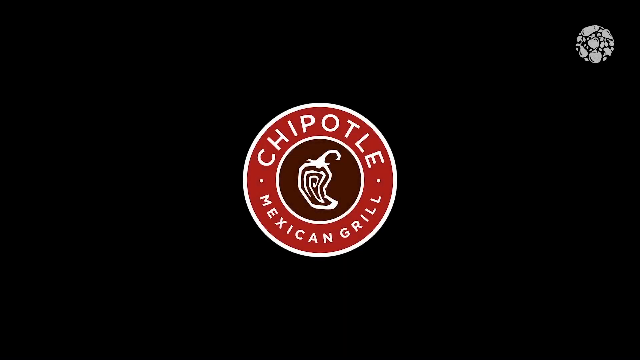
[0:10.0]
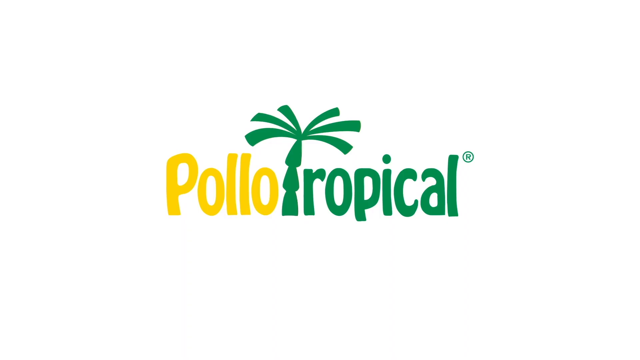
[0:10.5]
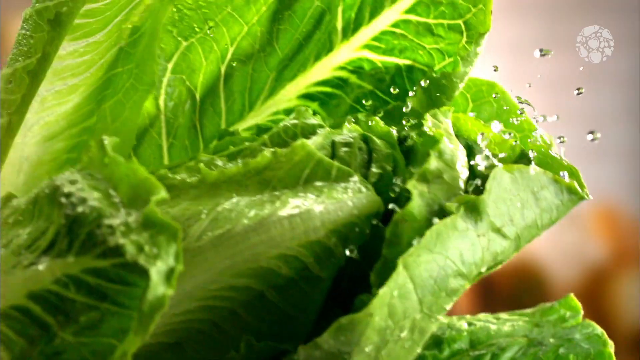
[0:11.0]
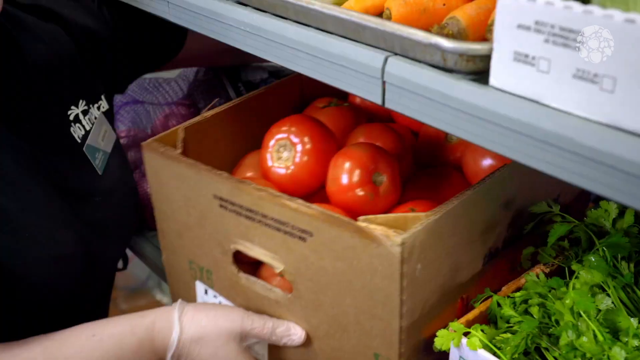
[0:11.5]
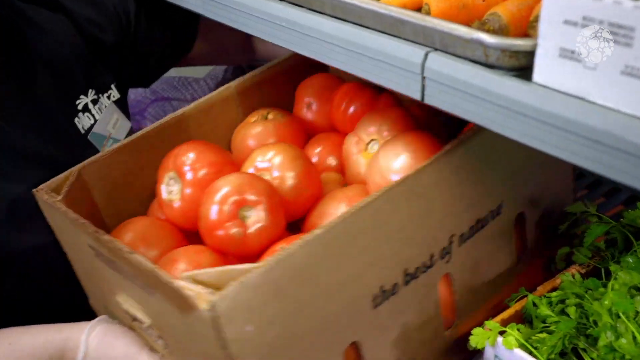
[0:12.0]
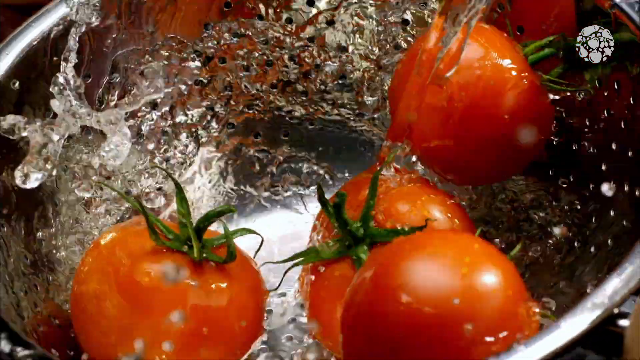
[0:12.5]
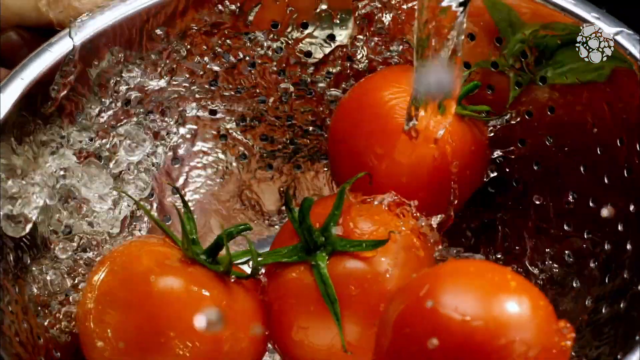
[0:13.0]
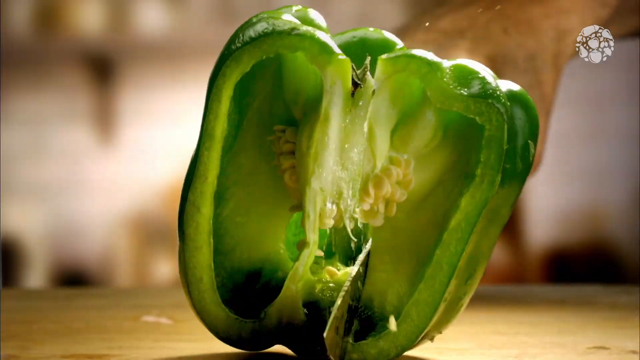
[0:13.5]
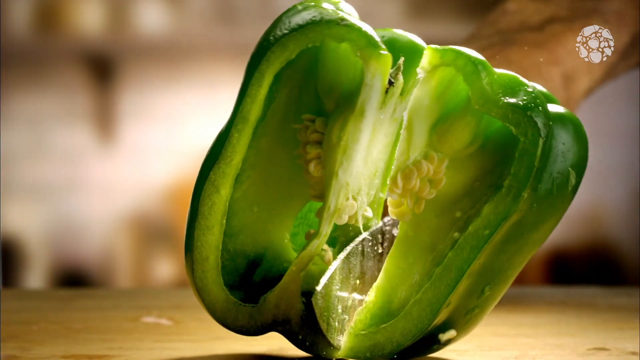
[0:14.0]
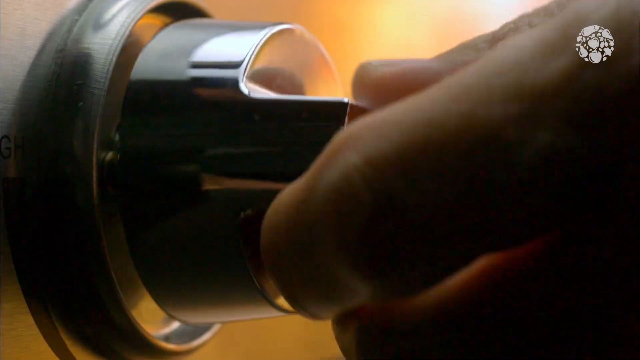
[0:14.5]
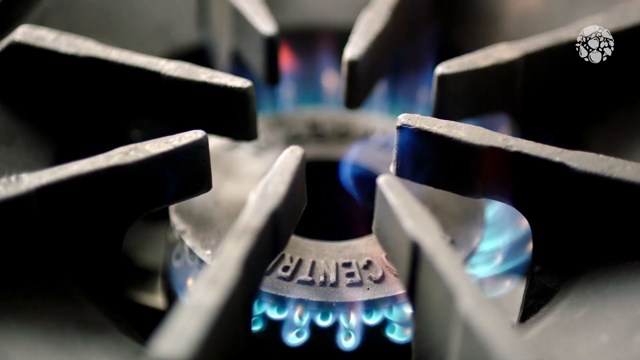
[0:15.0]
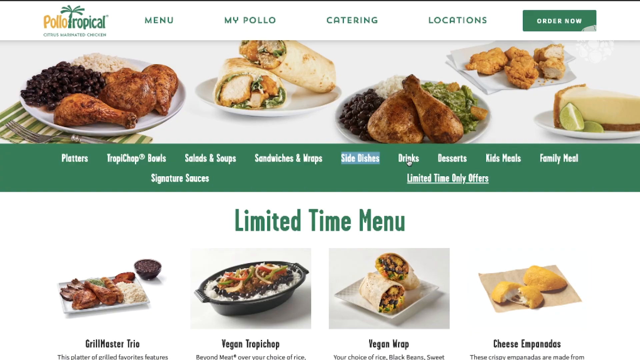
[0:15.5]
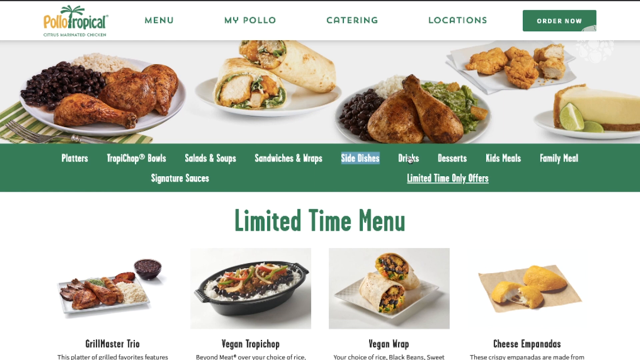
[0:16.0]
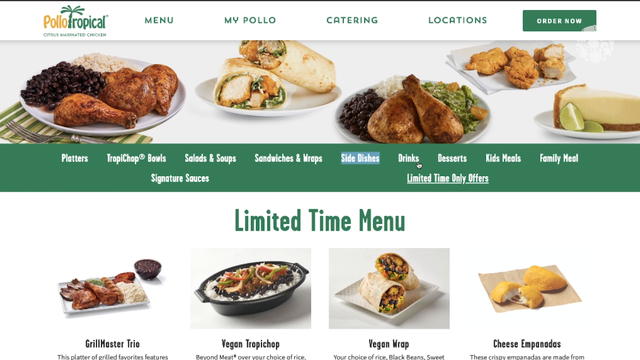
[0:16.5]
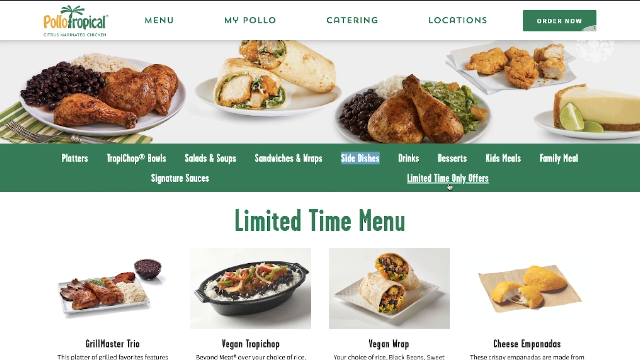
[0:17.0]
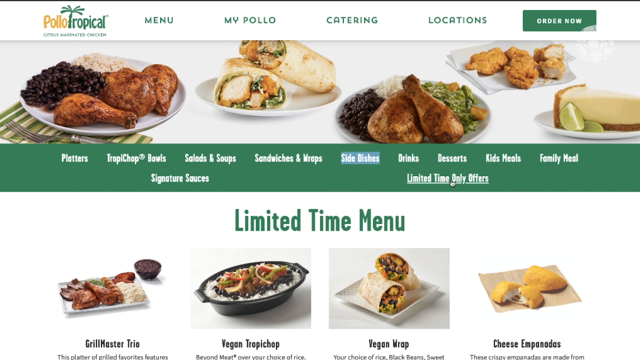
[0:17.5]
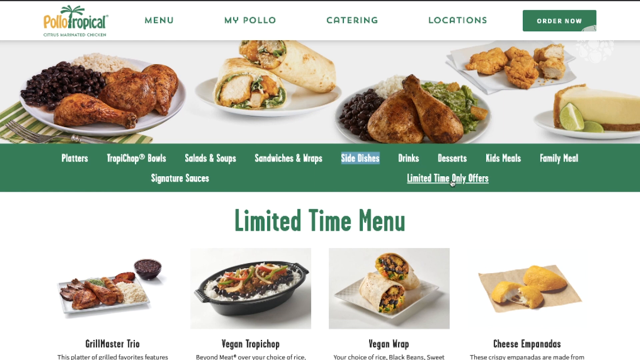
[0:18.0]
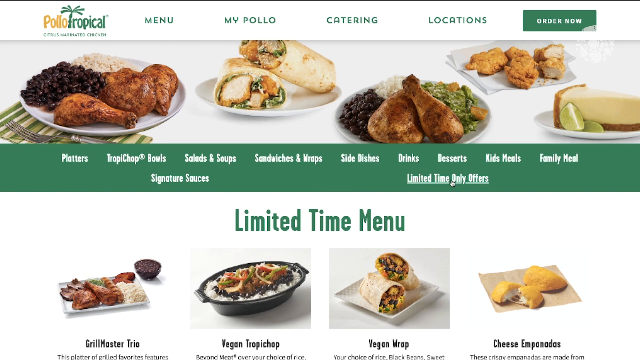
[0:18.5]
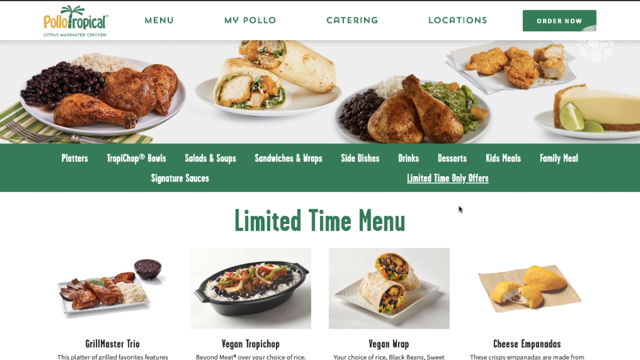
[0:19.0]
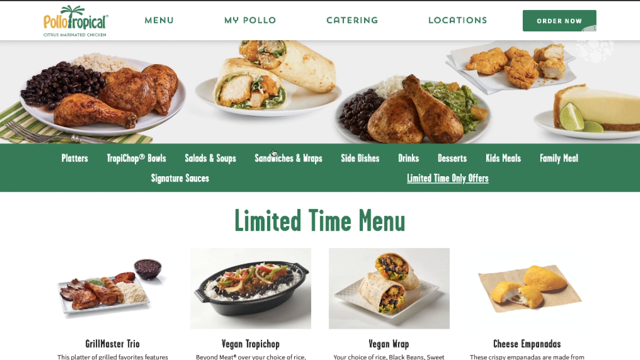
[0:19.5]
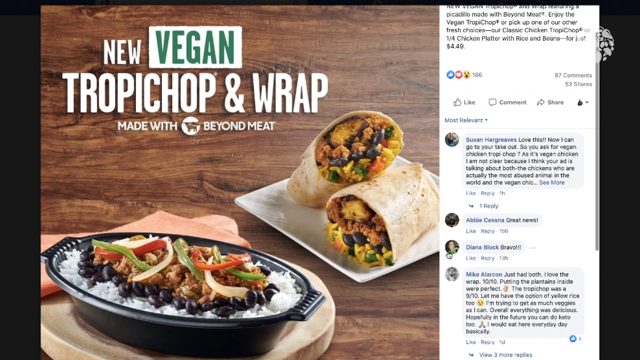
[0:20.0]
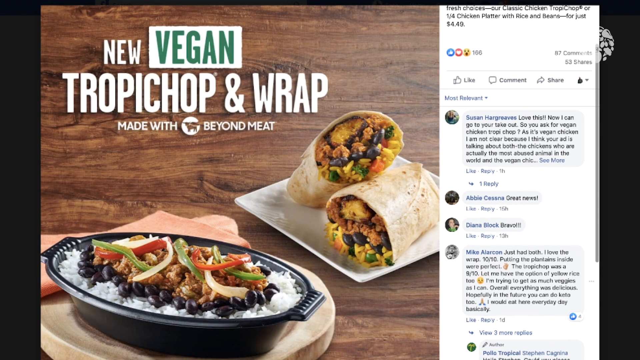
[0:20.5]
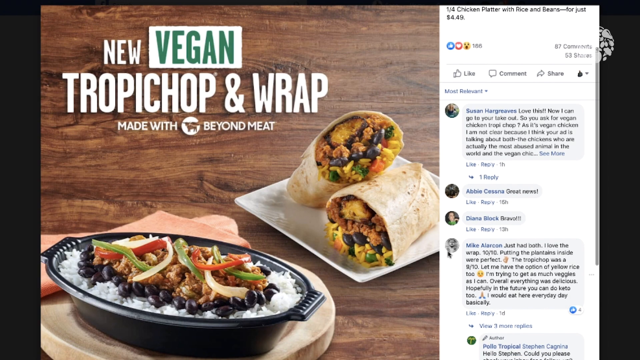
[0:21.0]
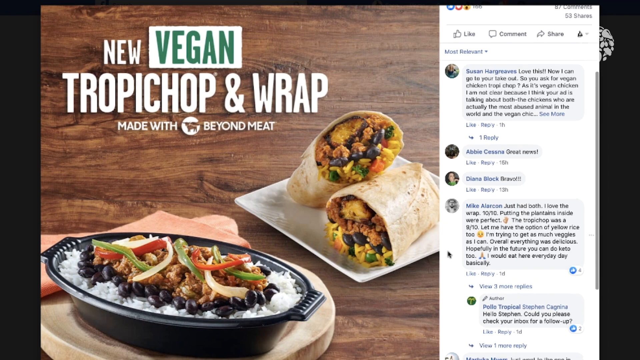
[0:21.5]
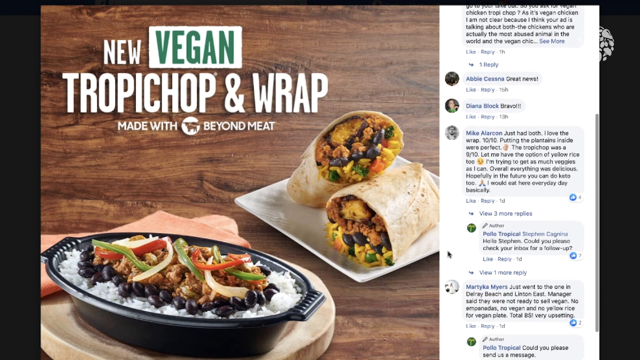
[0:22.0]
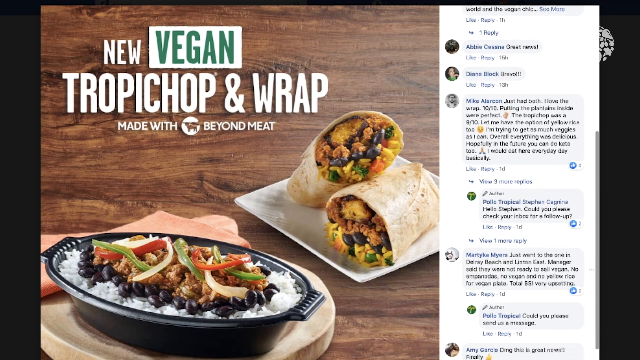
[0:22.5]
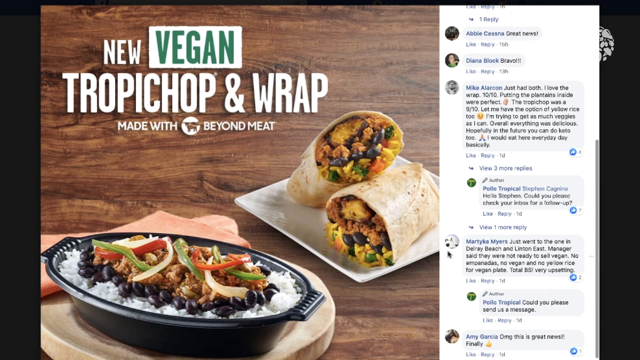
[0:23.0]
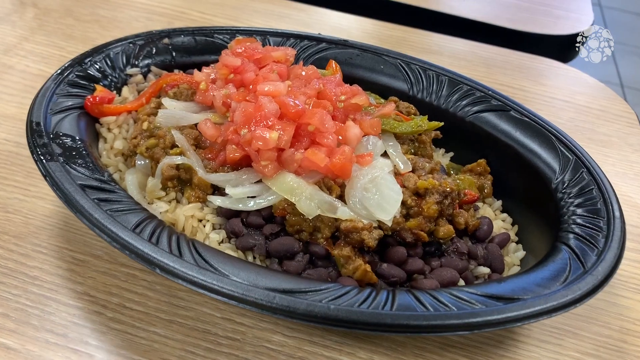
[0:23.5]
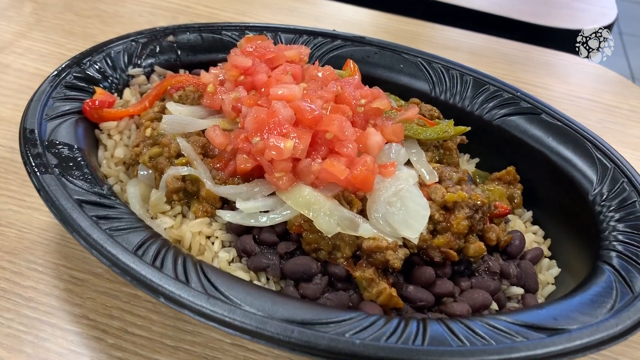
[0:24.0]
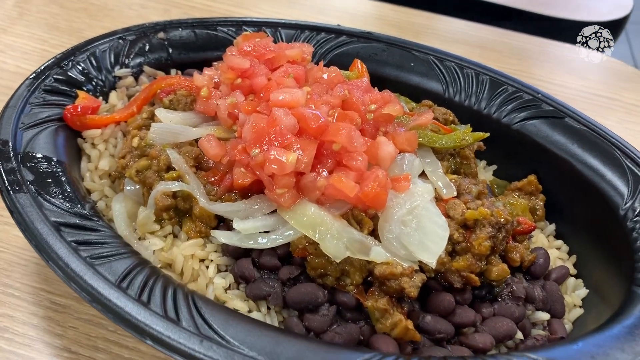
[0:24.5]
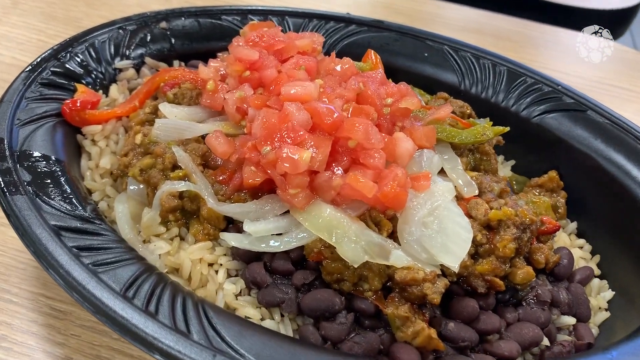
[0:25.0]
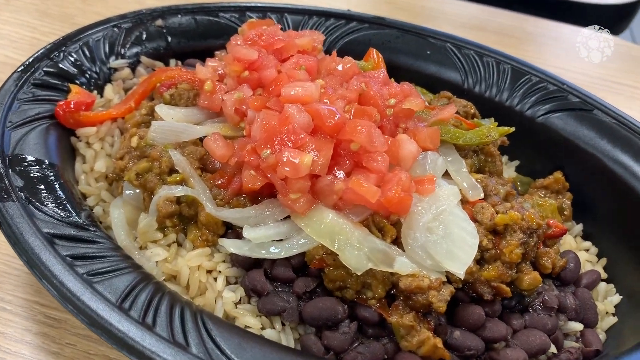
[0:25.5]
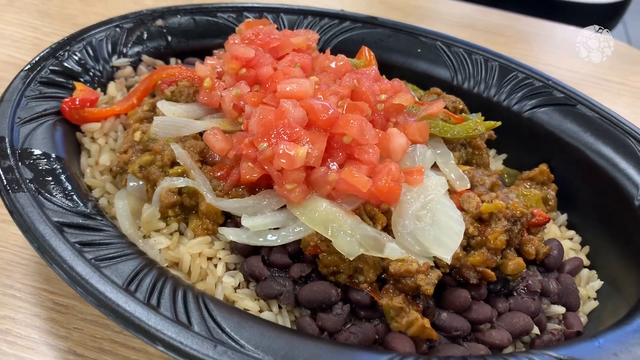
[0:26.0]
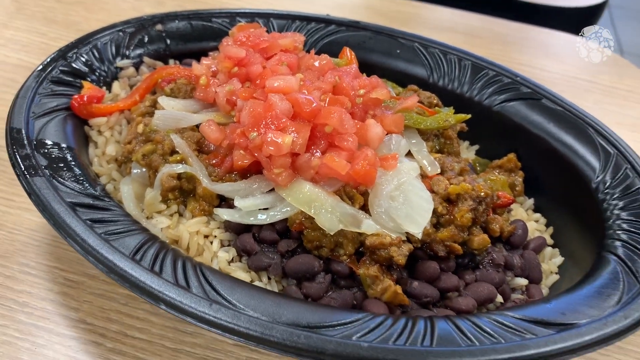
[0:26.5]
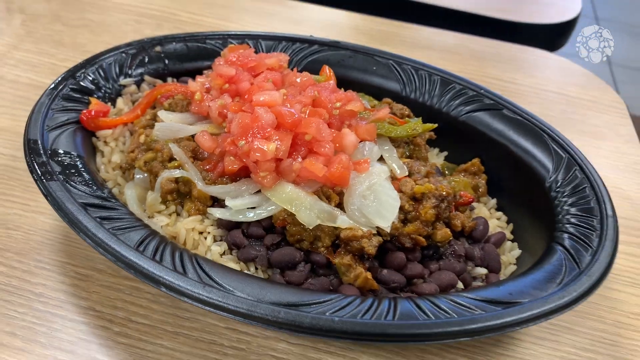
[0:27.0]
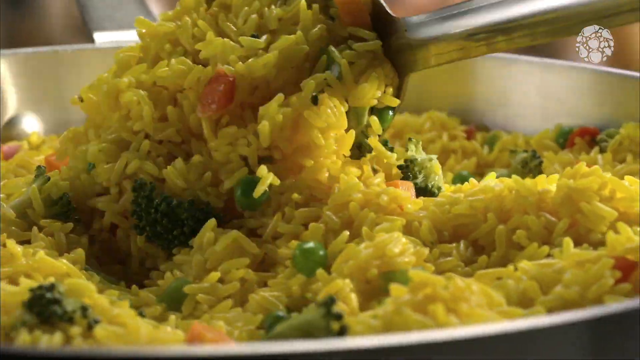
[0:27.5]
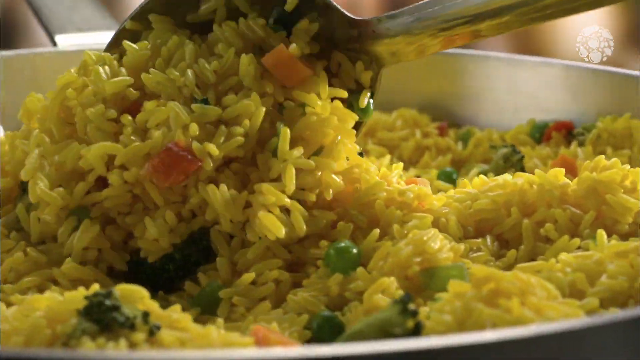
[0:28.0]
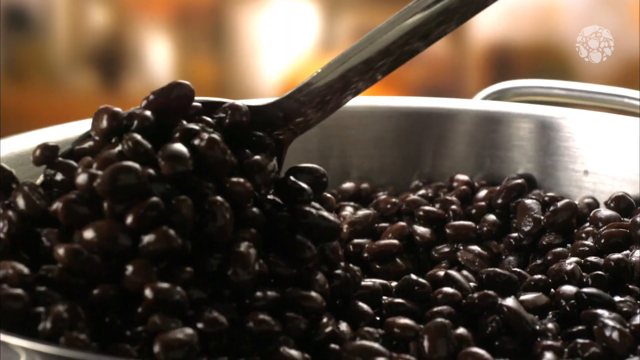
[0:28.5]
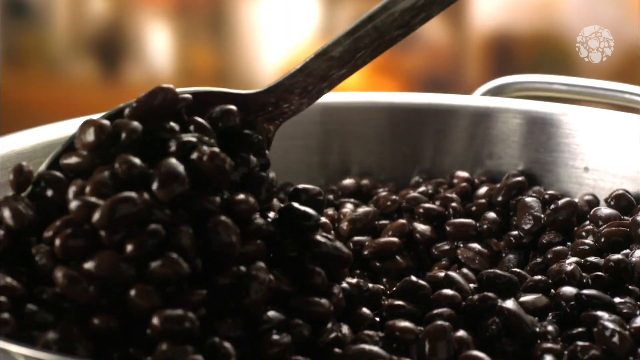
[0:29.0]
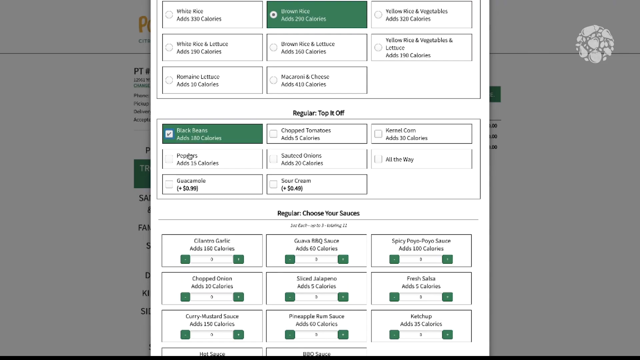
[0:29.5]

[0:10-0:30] A display shows tomatoes and bell peppers being washed, a bell pepper being cut, and gas being turned on. The ordering menu of Polo Tropical follows, listing platters, choppy chop bowls, salads and soup, sandwiches and wraps, side dishes, drinks, desserts, kids meal, family meal and a limited time only offer. Items include a vegan wrap, cheese empanadas and a vegan tropichop. The user clicks on the limited time offers, and social media appears, probably with reviews, featuring the new vegan chop and wrap made with Beyond Meat, along with comments from other people.